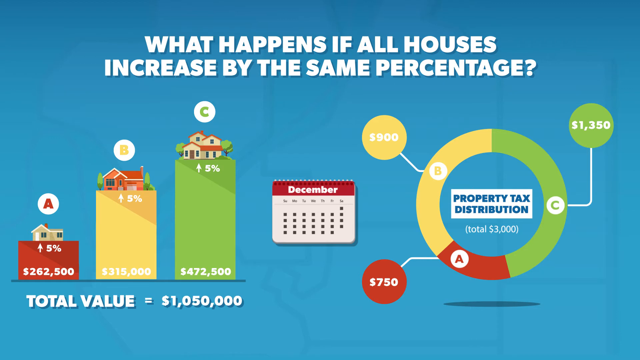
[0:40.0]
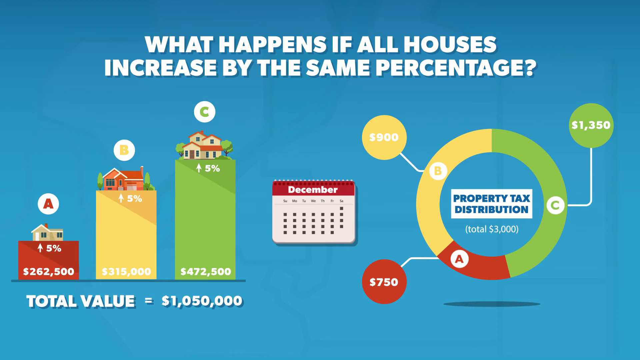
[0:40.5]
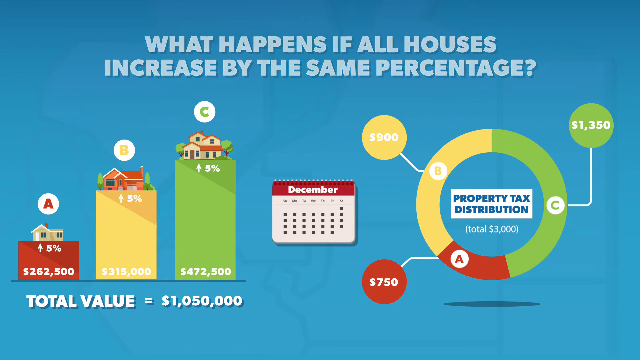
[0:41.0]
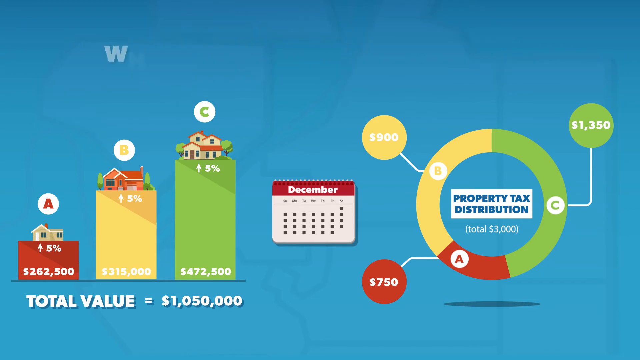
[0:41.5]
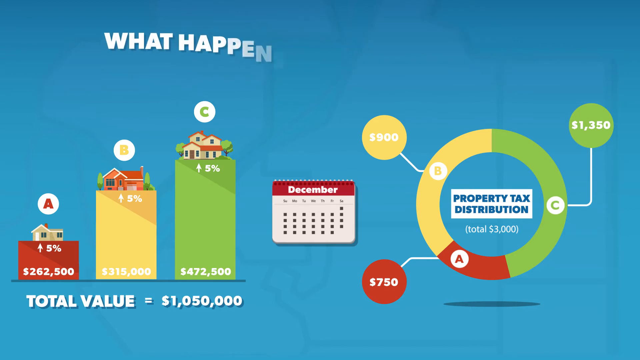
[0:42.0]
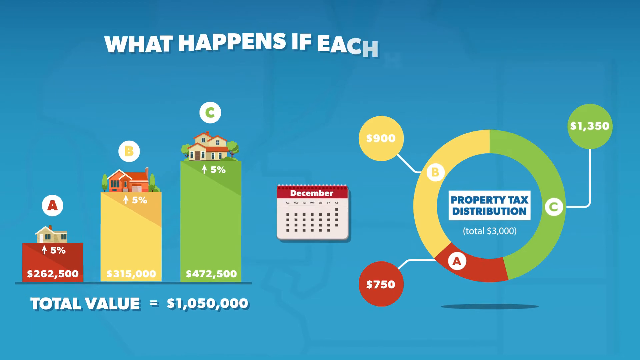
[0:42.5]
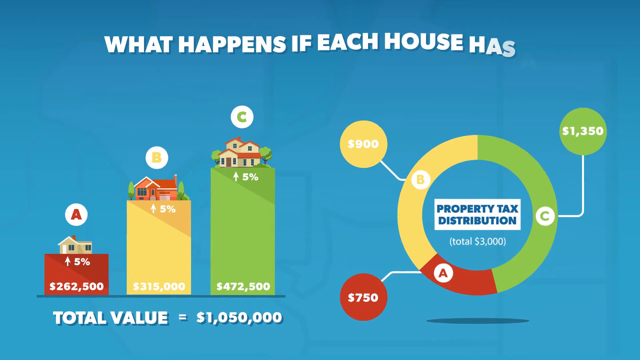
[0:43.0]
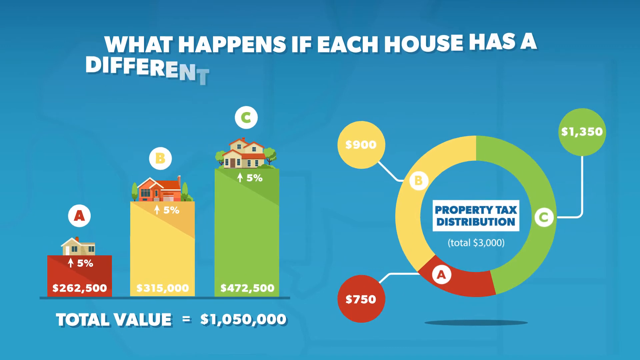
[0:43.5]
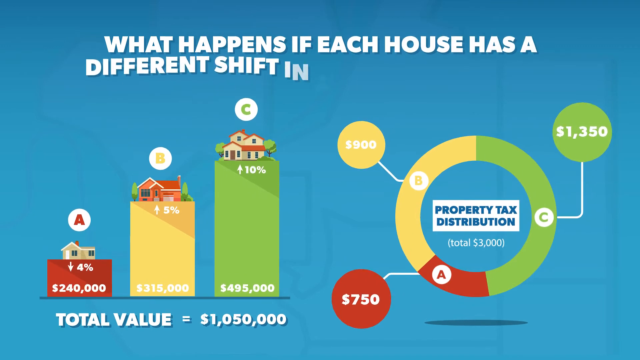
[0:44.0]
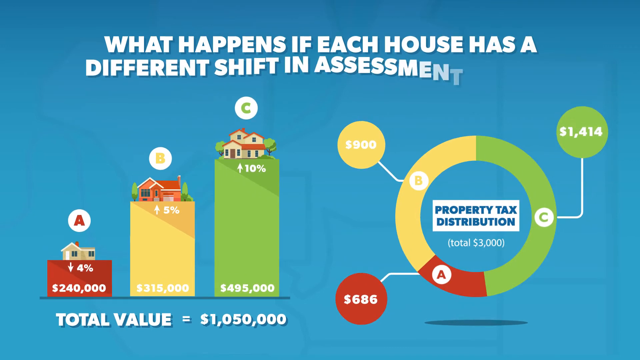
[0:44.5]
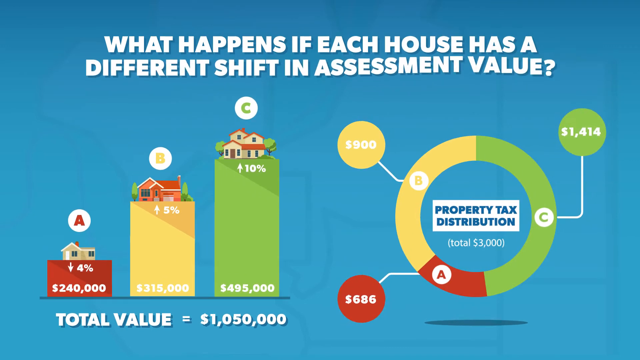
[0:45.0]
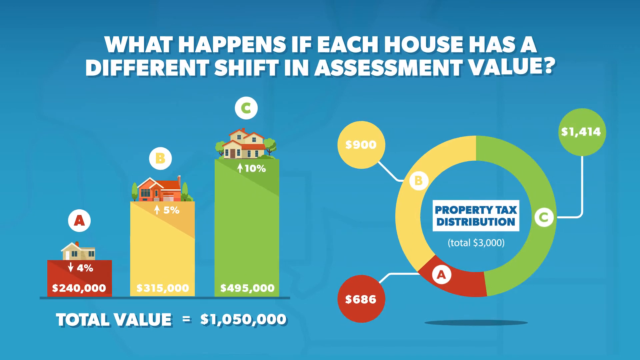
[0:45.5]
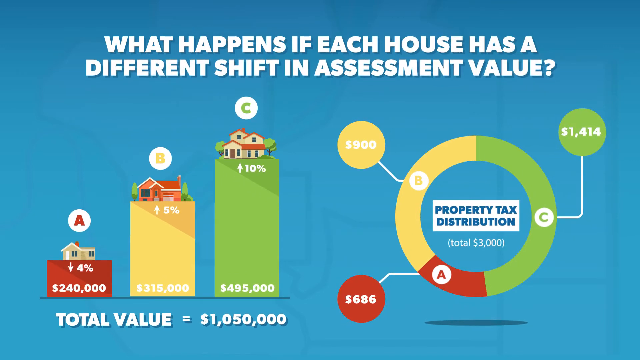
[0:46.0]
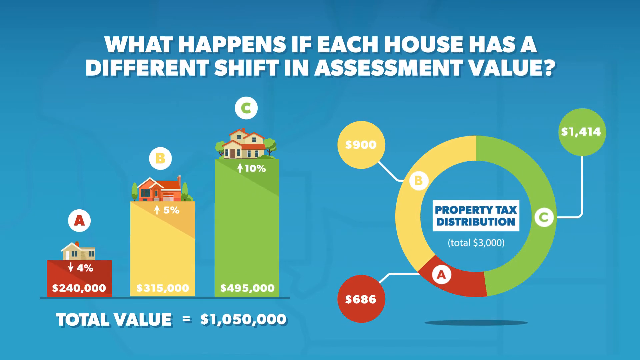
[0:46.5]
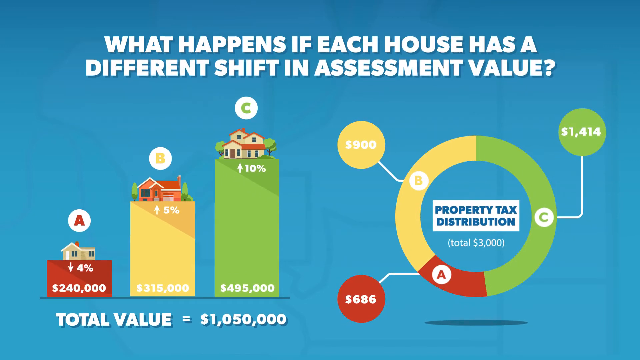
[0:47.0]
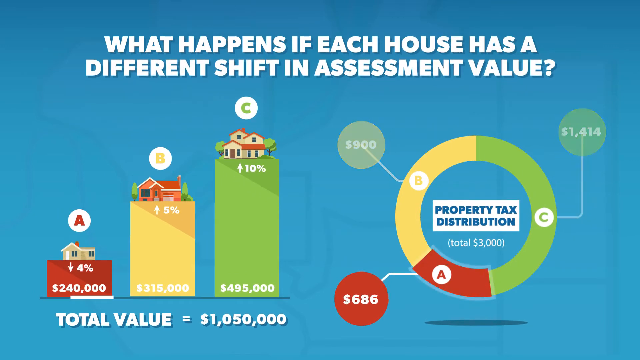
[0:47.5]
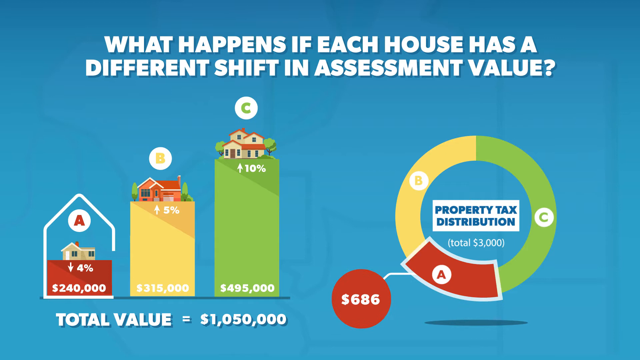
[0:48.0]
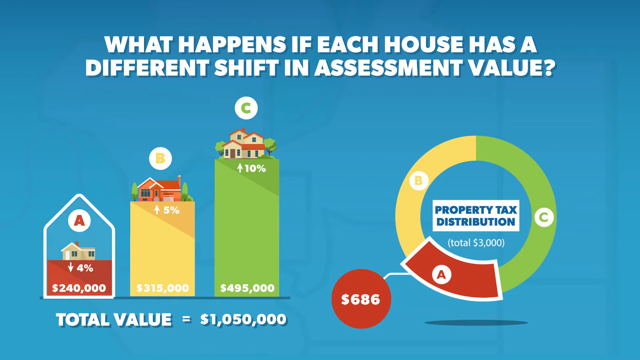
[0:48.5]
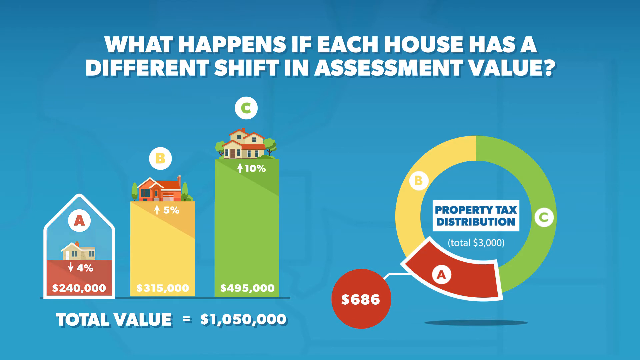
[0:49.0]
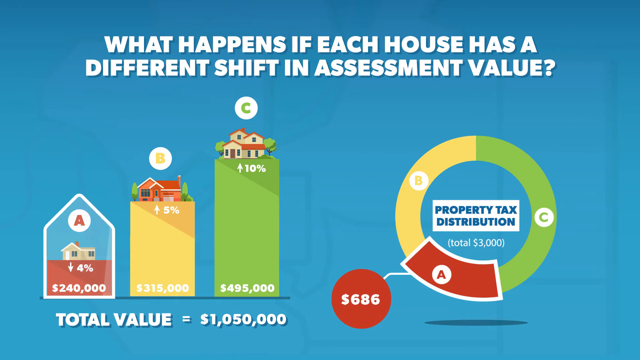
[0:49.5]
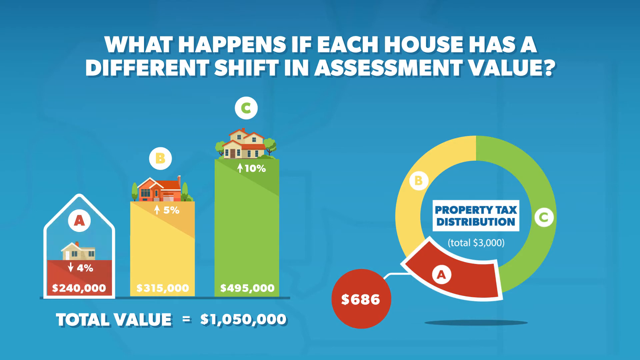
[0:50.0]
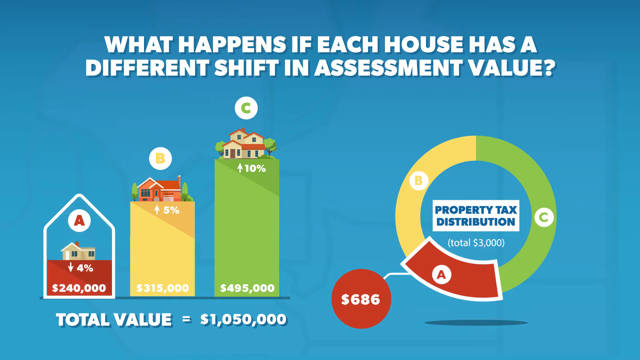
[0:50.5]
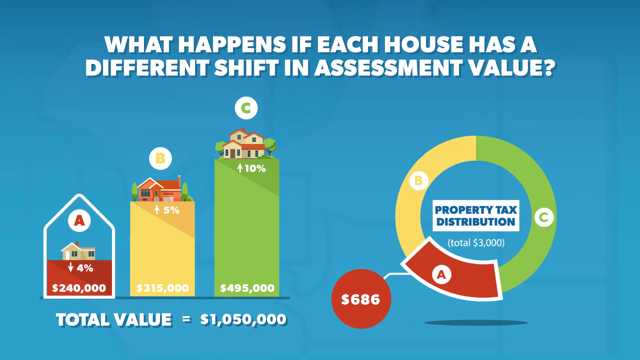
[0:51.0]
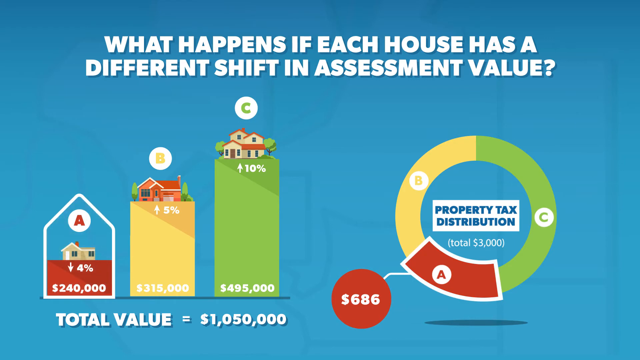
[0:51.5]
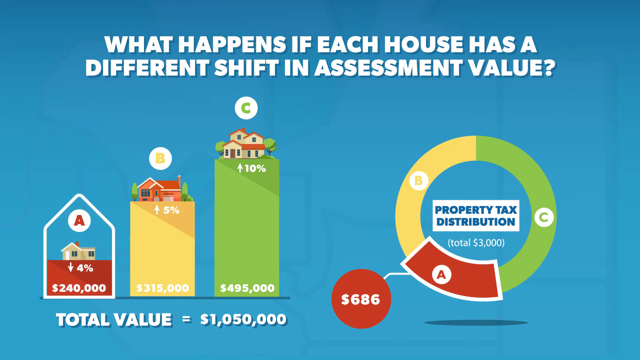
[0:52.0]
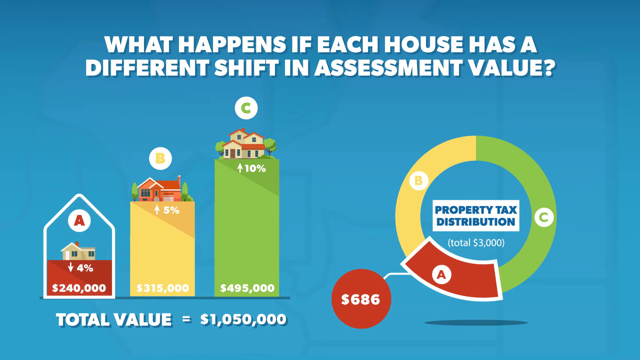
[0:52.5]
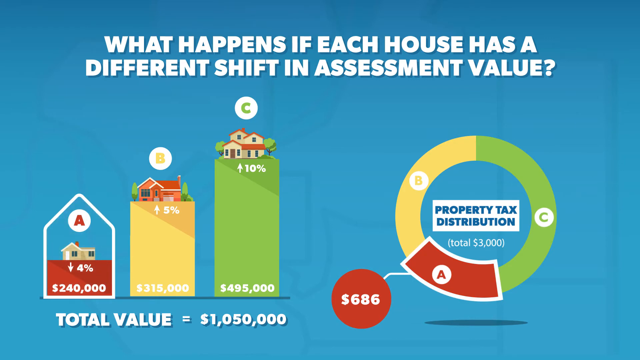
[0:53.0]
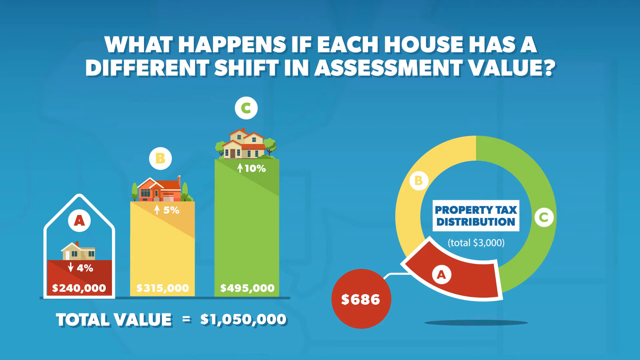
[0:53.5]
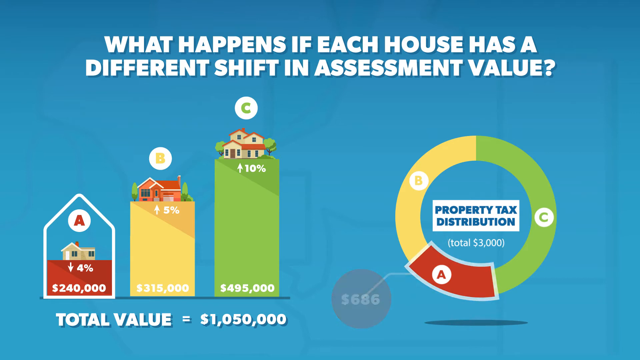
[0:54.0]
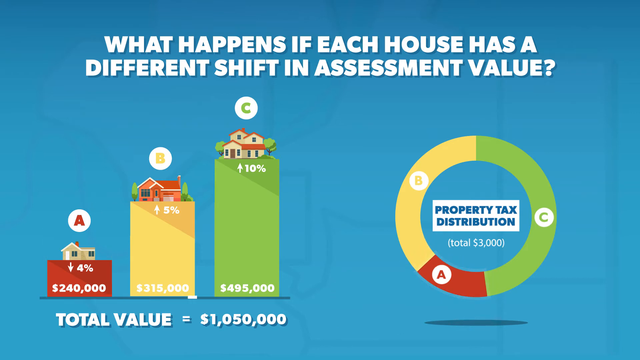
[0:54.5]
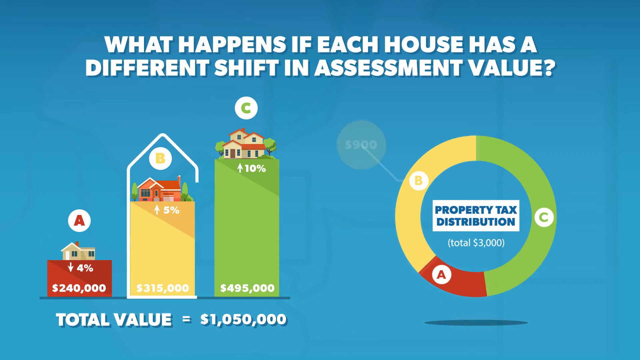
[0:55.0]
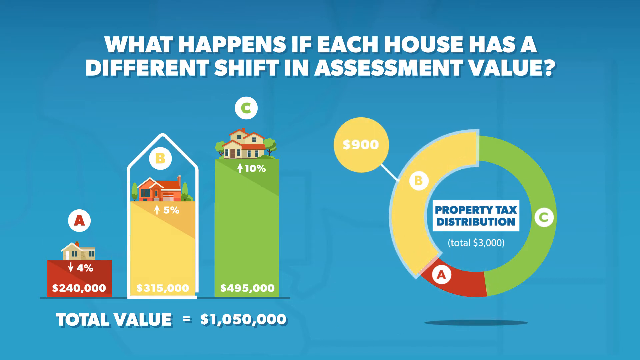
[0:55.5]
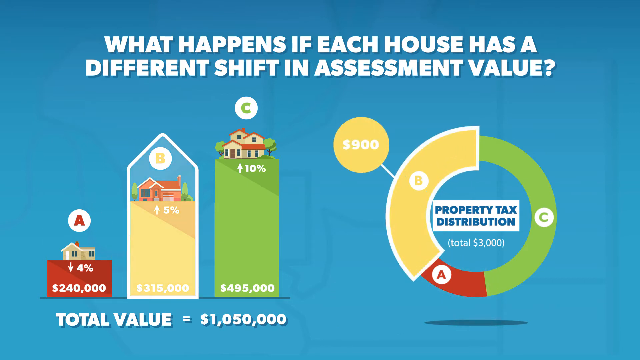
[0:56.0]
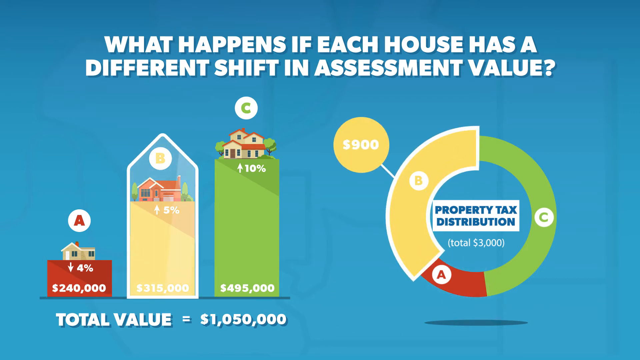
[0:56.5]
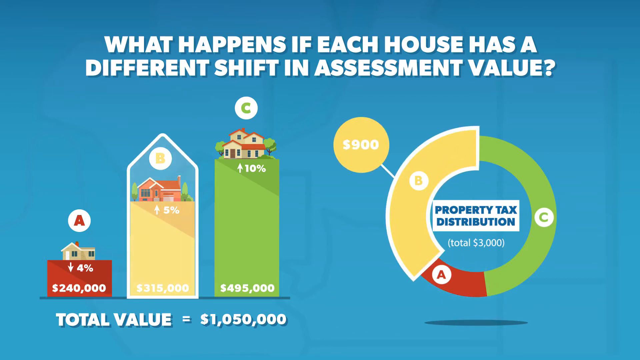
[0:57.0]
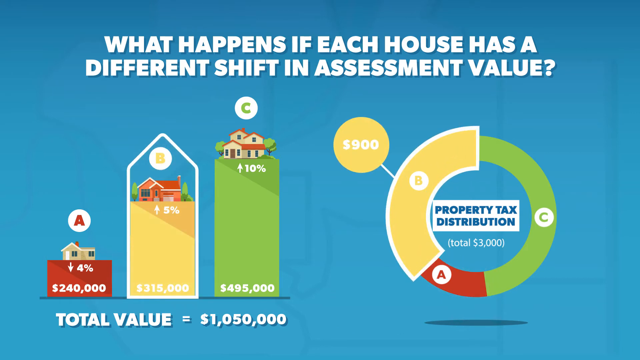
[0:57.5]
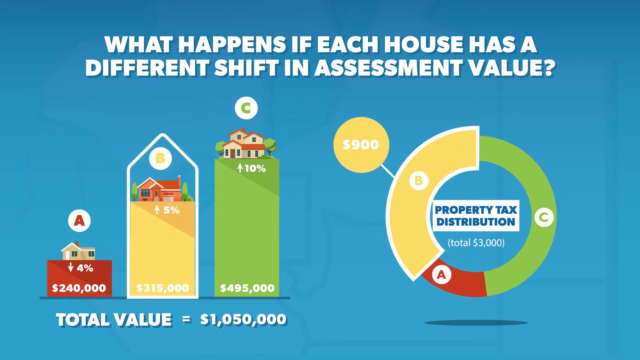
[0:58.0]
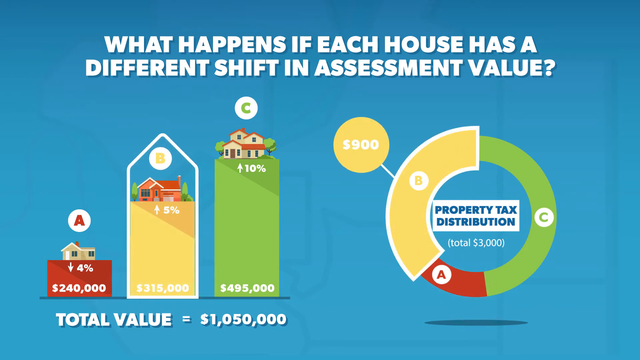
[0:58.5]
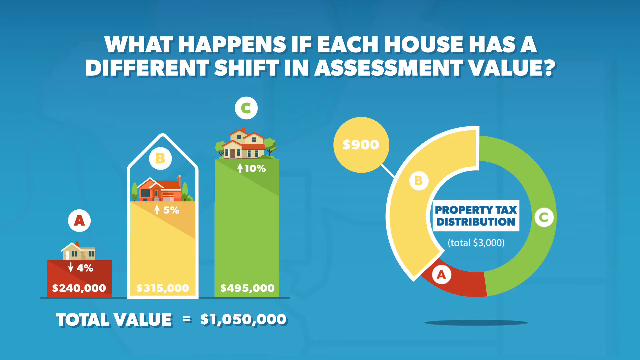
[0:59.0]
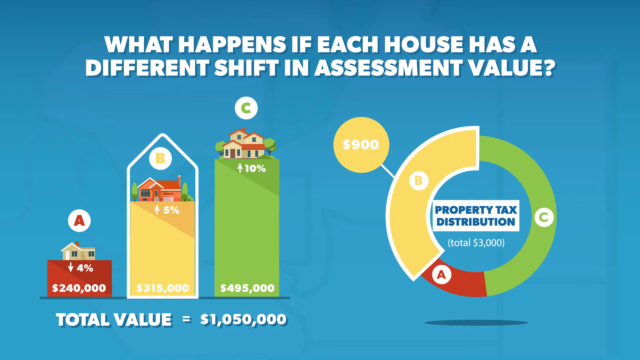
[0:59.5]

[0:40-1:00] The presentation continues with the caption "What happens if each house has a different shift in assessment value?" Illustrations at the bottom show house A at $240,000 representing the lower trend, the second house at $15,000 and 5% representing the growth trend, and house C at 10% and $95,000, also representing the growth trend. On the right is an illustration of the property tax distribution: approximately $686,000 for A, $900,000 for B and up to $1,400 for C, with a total of up to $3,000 for the three houses. The illustration then highlights the figures, with A at 240,000 going to $686, 1350 for house C and 900 for house B.